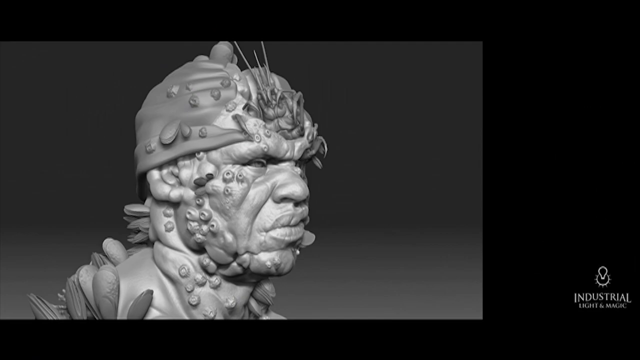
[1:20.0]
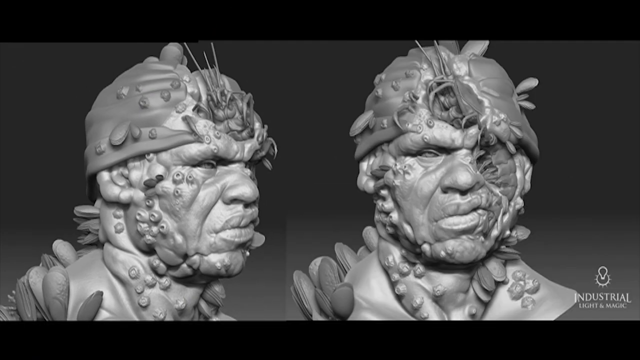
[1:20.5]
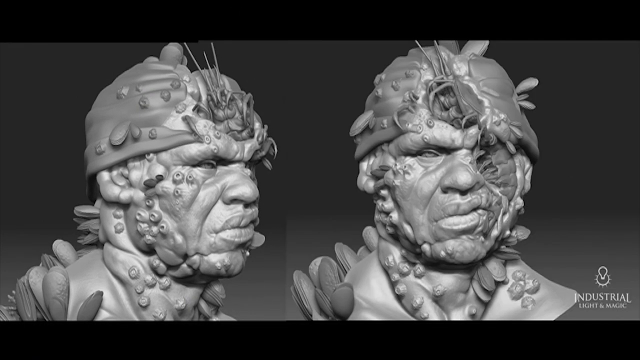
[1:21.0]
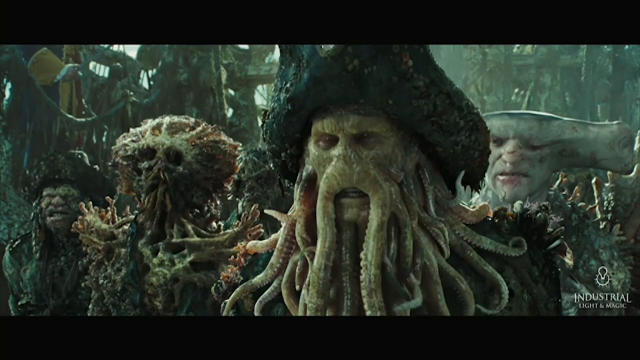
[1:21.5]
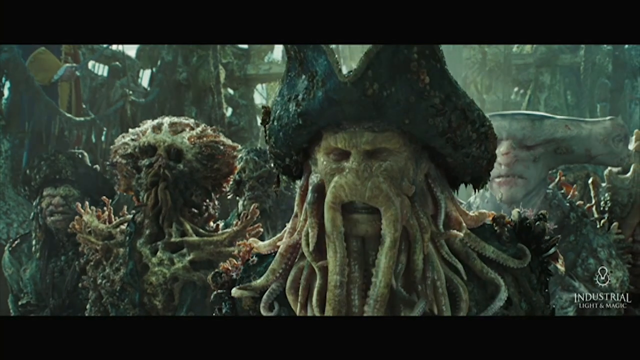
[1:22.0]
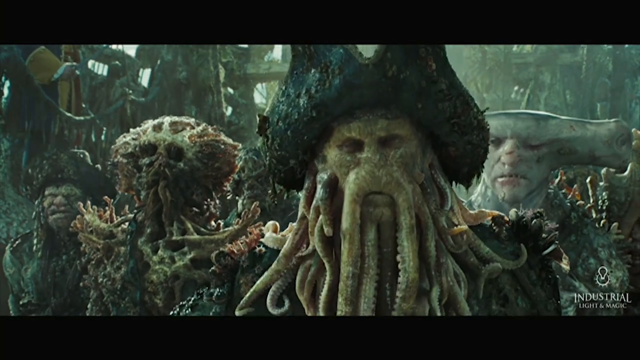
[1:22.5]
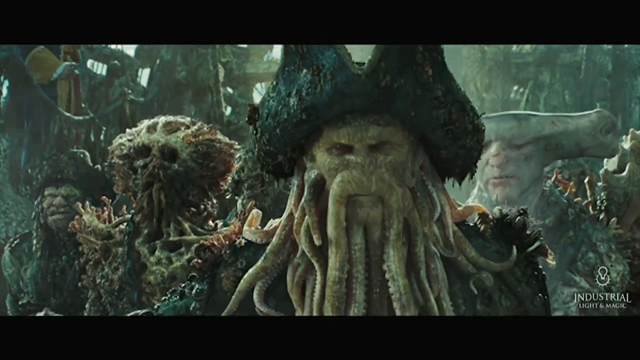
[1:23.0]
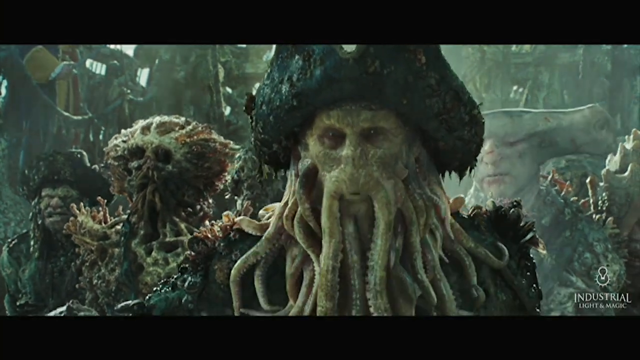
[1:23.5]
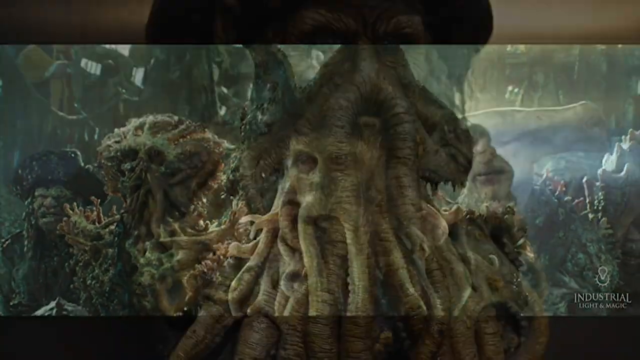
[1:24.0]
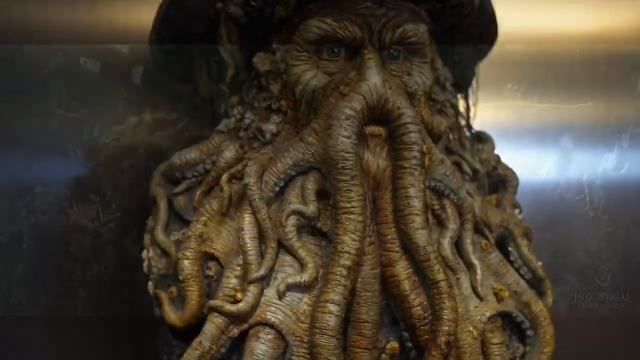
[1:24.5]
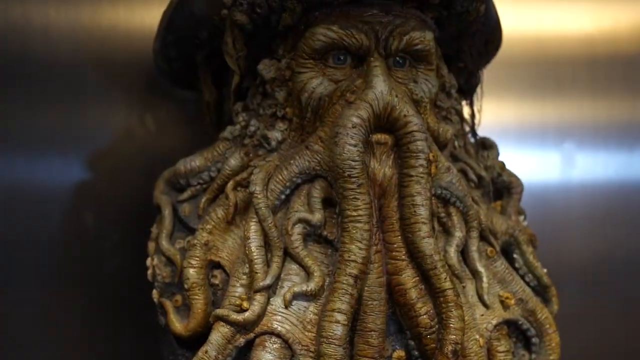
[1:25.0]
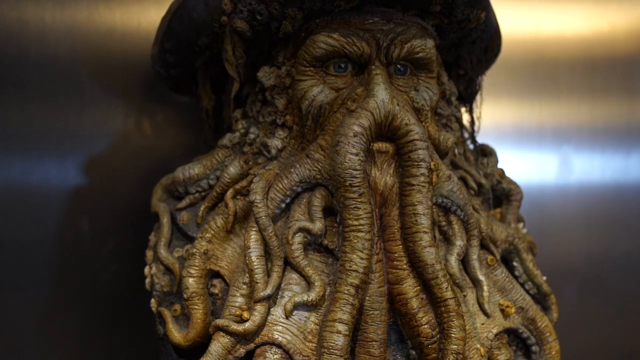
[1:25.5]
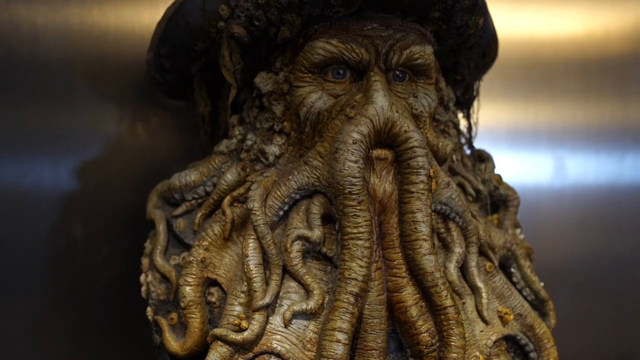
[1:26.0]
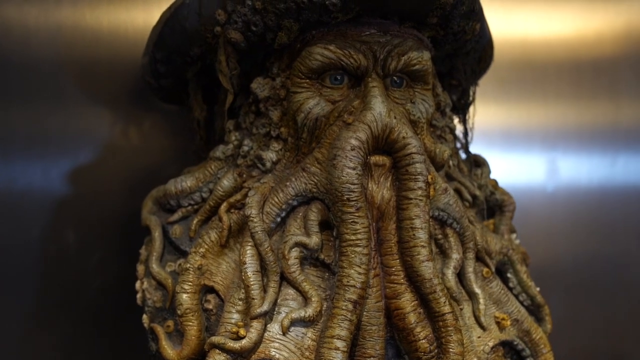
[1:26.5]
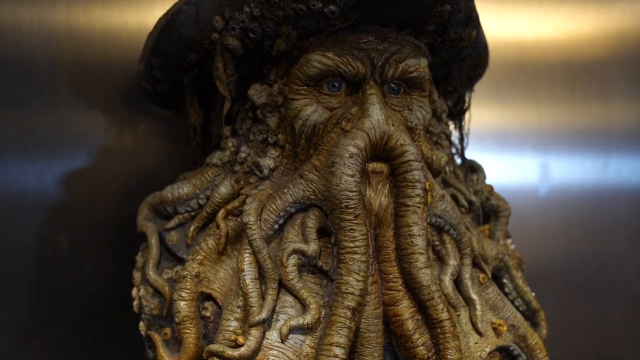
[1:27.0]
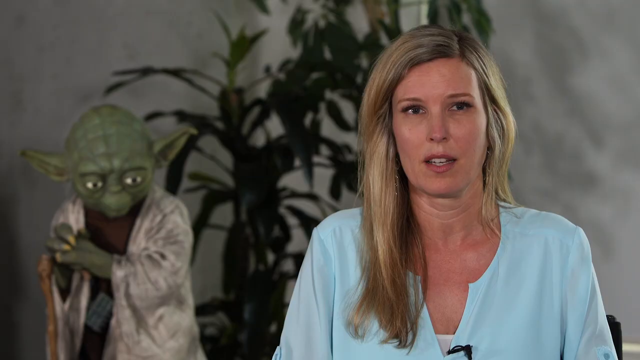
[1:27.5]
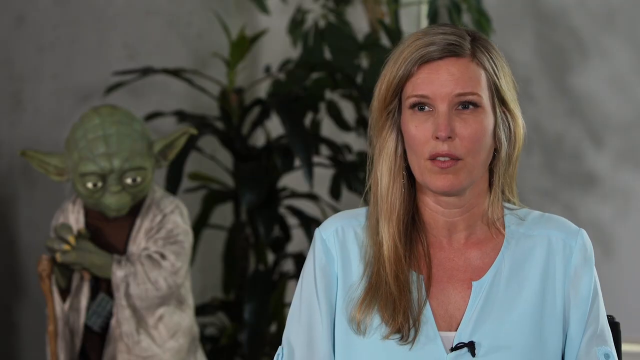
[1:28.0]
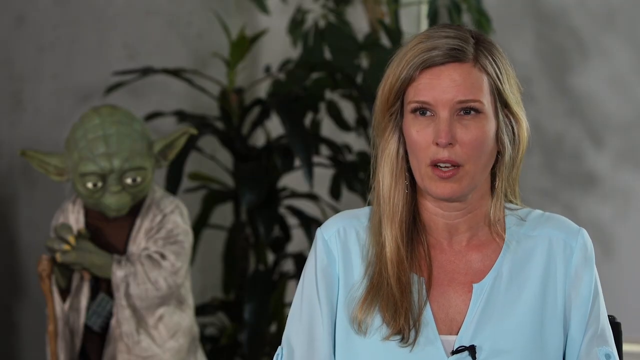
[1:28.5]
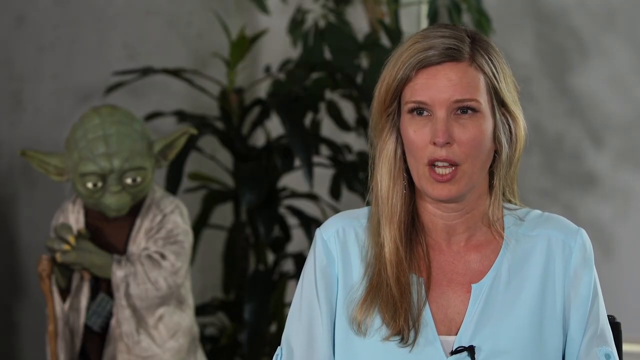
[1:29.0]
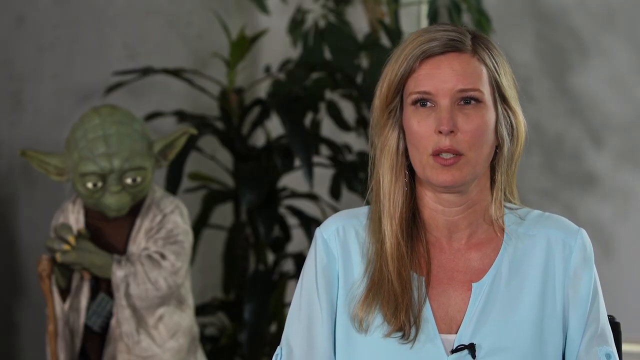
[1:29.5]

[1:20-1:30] A picture of a black and white character appears, apparently from Pirates of the Caribbean. A creature is shown first in clay, then as a claymation character, then being animated and put on screen. The final shot from the movie shows the character walking, talking and moving around with facial expressions added. The original seems to be made of clay, though it could be a drawing. After the clay and animated stages, the finished character is shown.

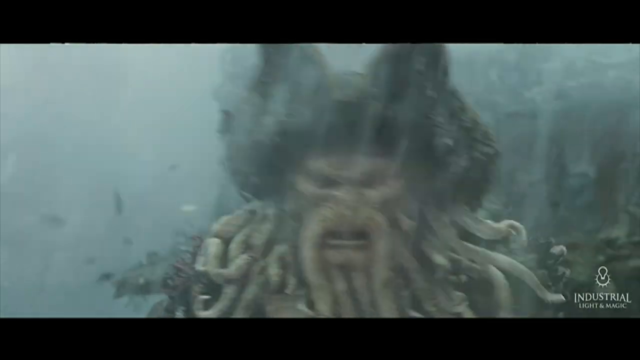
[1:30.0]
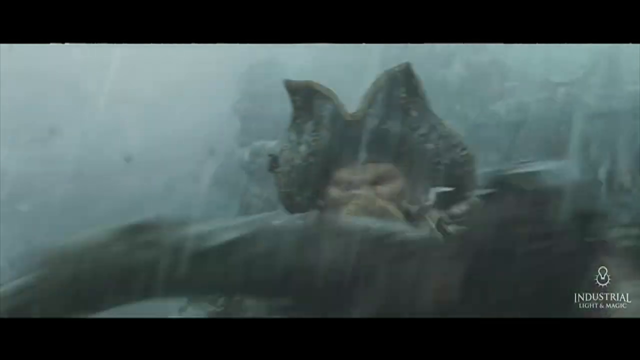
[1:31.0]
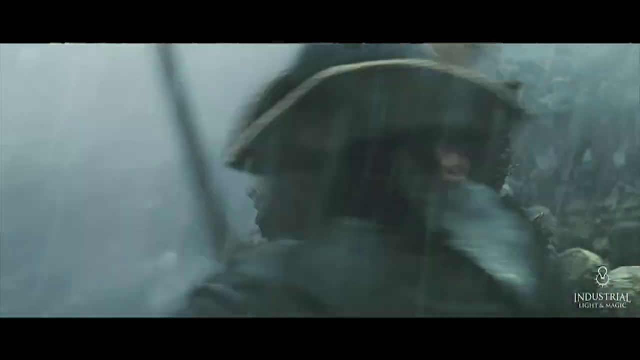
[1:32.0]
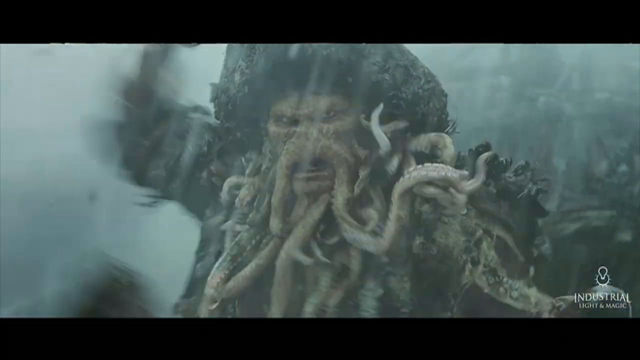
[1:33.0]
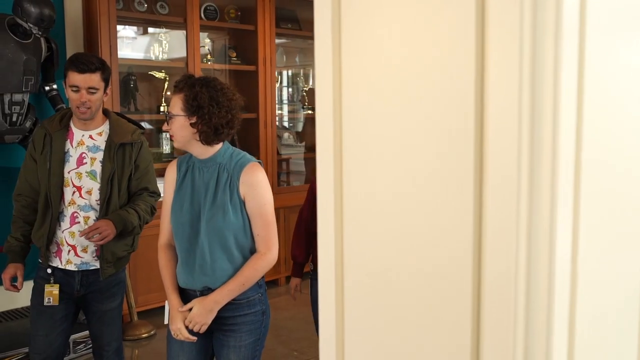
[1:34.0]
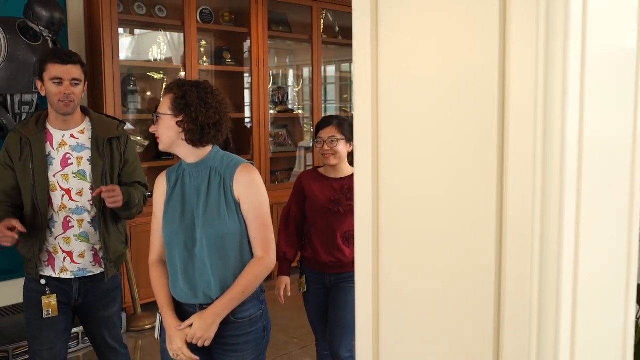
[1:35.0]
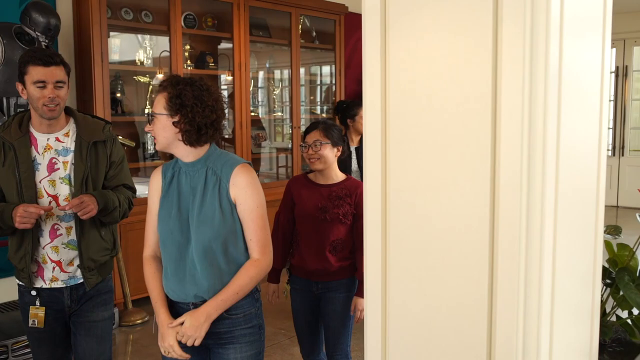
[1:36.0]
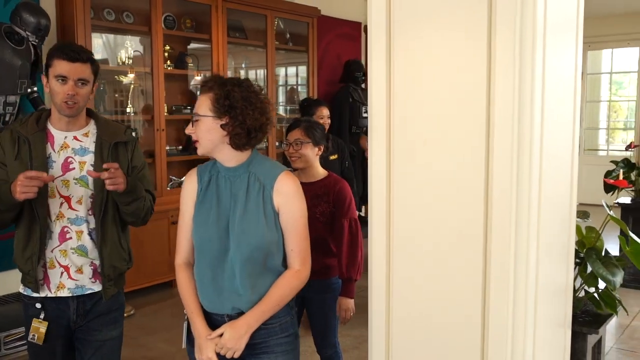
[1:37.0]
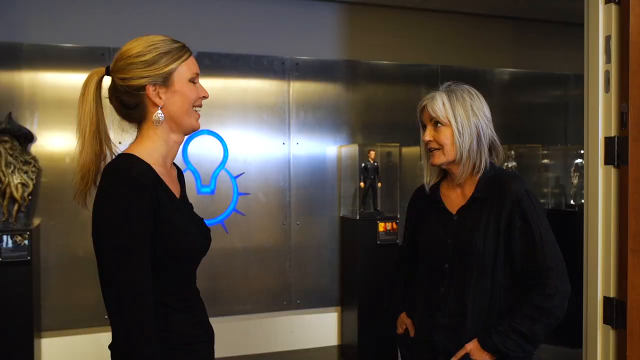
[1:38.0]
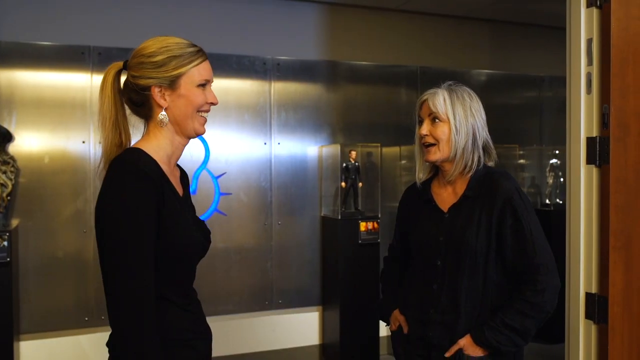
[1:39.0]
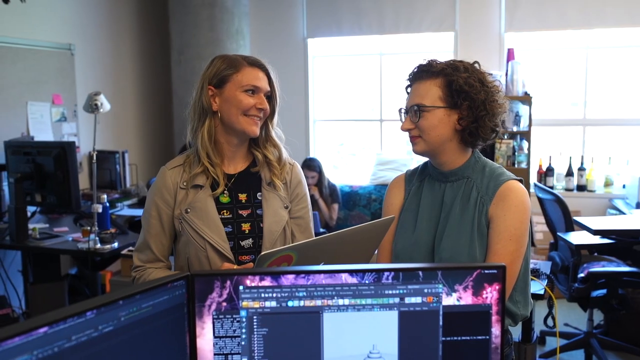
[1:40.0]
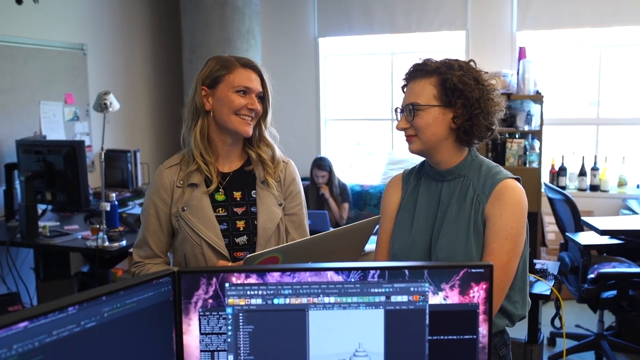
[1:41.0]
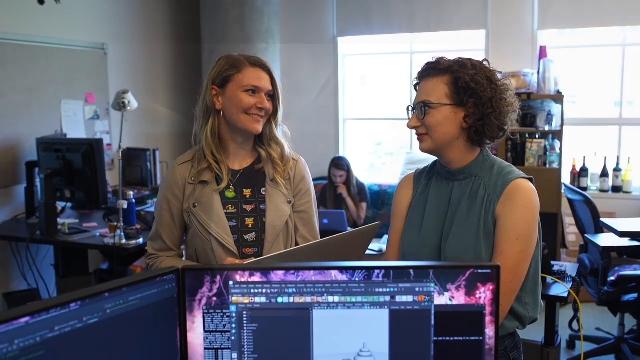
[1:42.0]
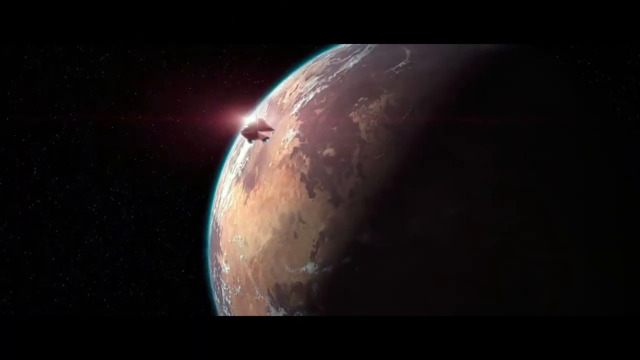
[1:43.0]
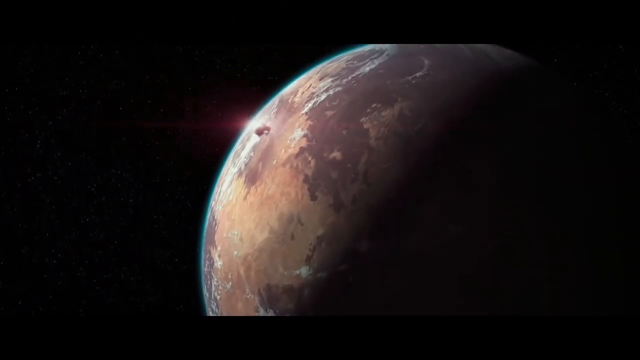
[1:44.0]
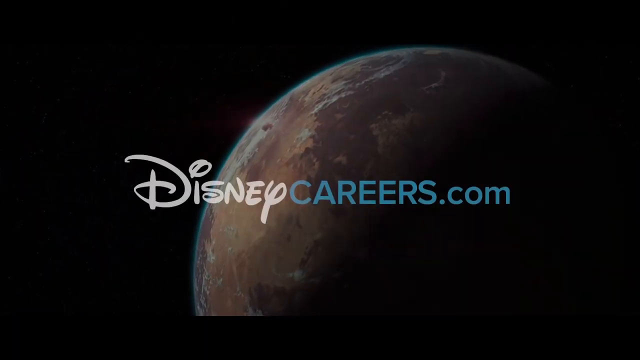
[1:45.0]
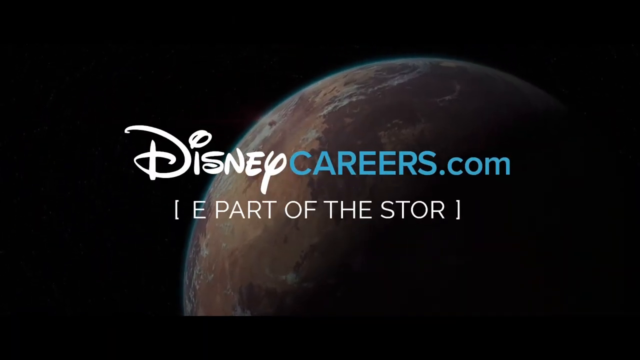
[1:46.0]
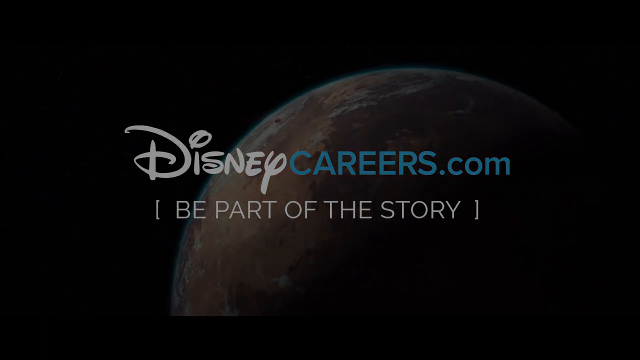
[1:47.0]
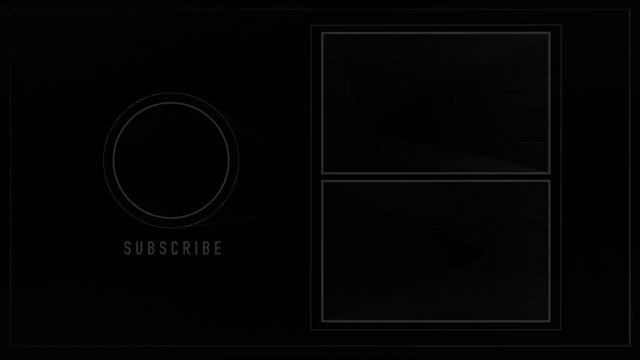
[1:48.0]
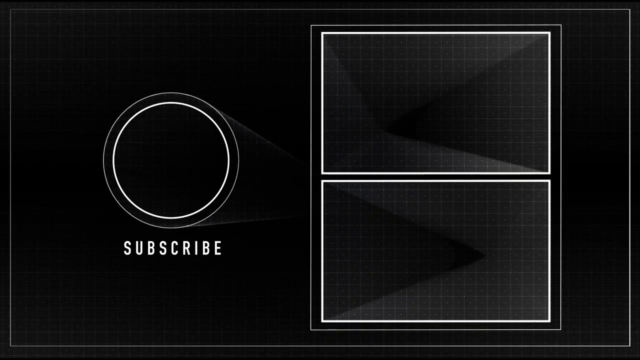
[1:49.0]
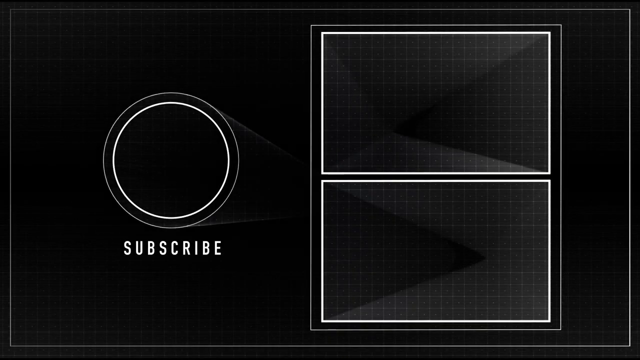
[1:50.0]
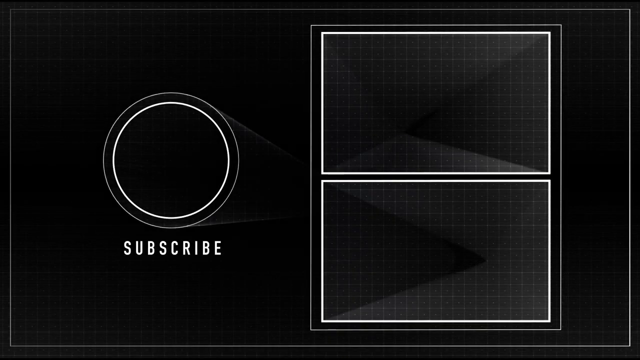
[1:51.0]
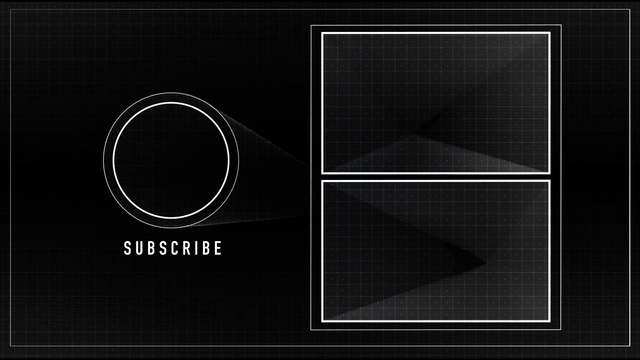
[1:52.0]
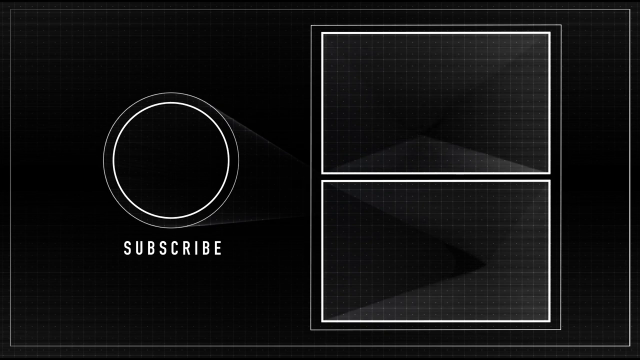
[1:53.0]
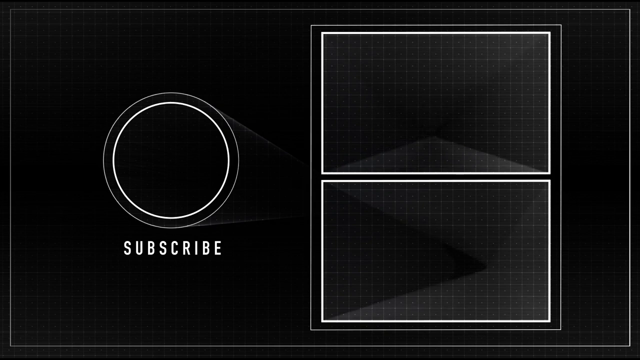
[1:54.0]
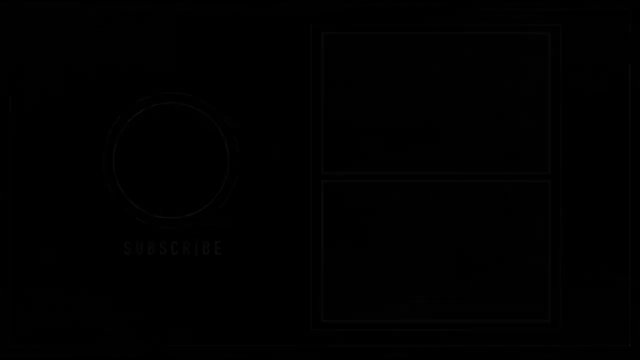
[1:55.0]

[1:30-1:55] An animation sequence shows a character, apparently Davy Jones, fighting off pirates. The video then shows what are probably the studio's workers: many women of different ethnicities working in different careers at the studio. A man and a woman talk with two other women, all of whom work for the studio. At the end the screen reads "Disney" and "disneycareers.com, be part of the story".